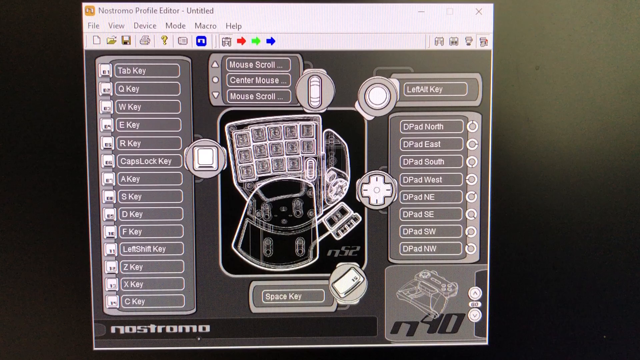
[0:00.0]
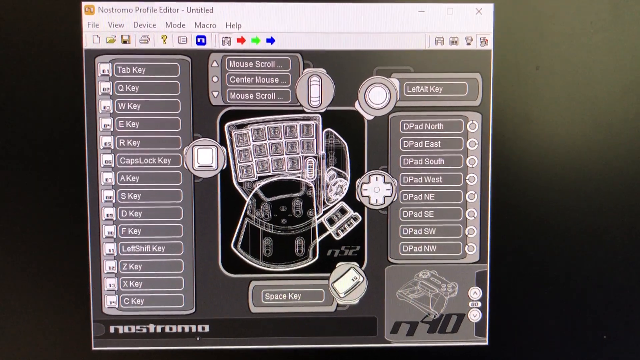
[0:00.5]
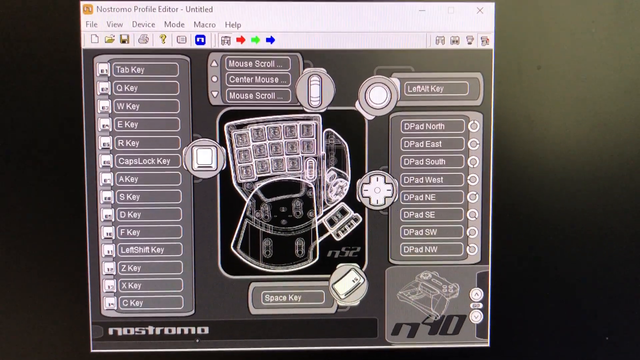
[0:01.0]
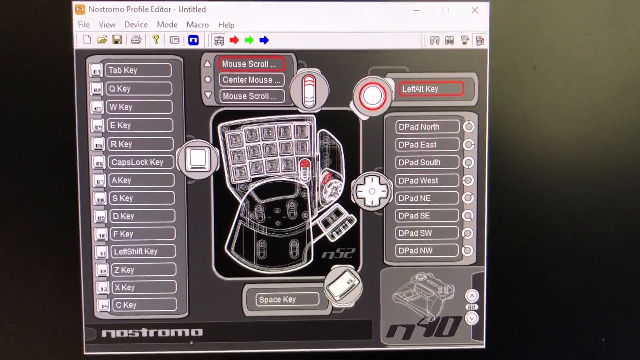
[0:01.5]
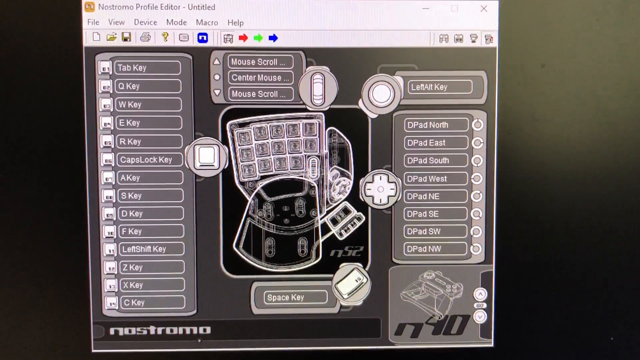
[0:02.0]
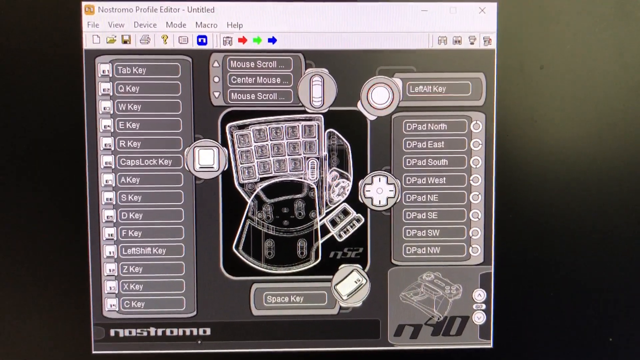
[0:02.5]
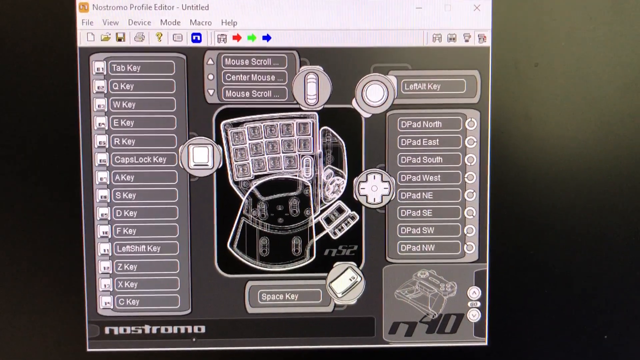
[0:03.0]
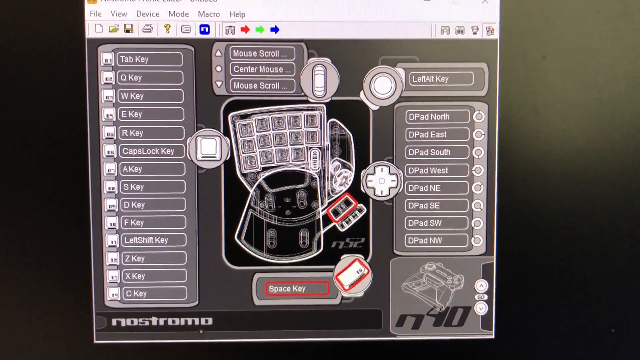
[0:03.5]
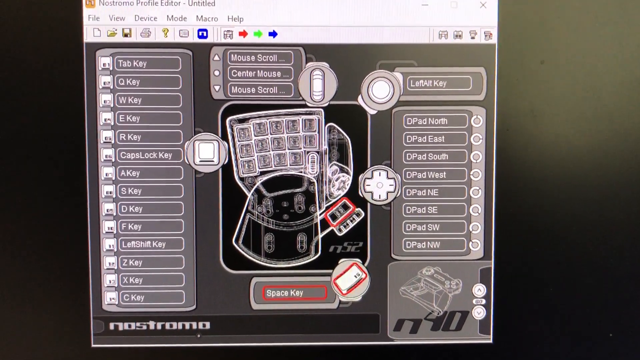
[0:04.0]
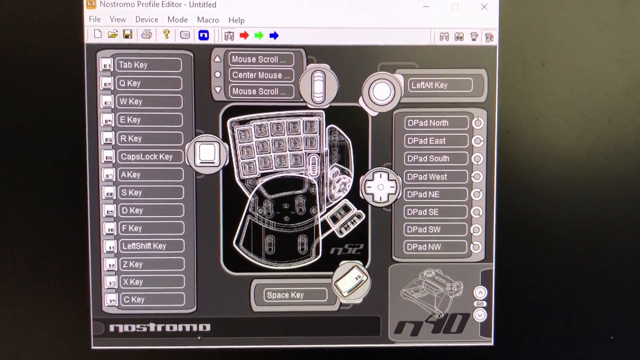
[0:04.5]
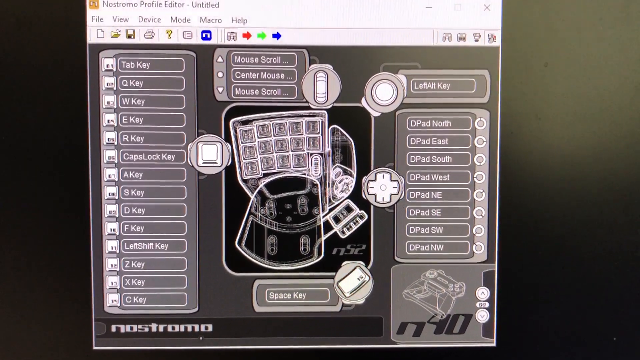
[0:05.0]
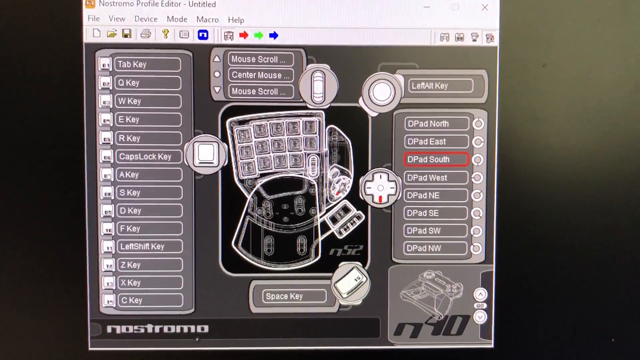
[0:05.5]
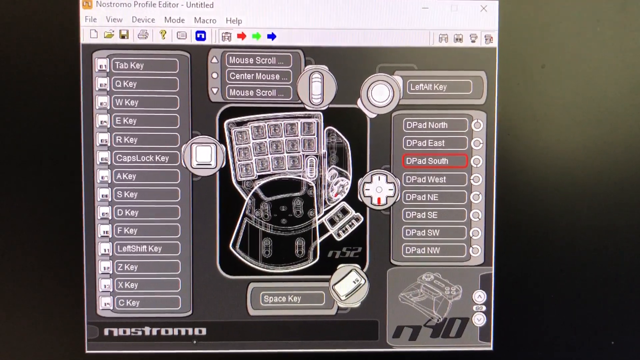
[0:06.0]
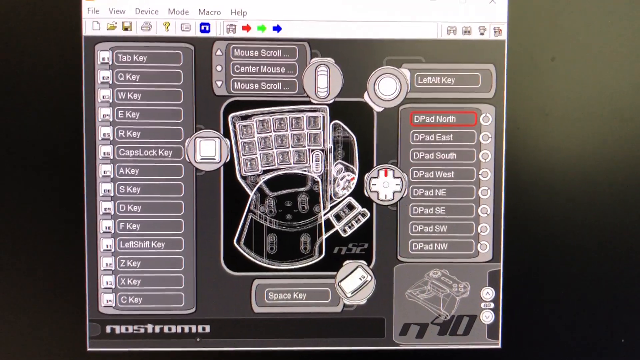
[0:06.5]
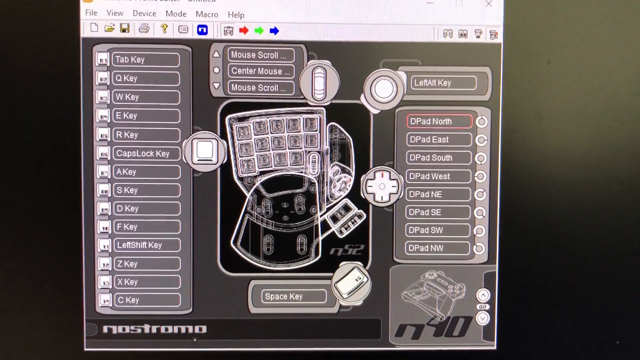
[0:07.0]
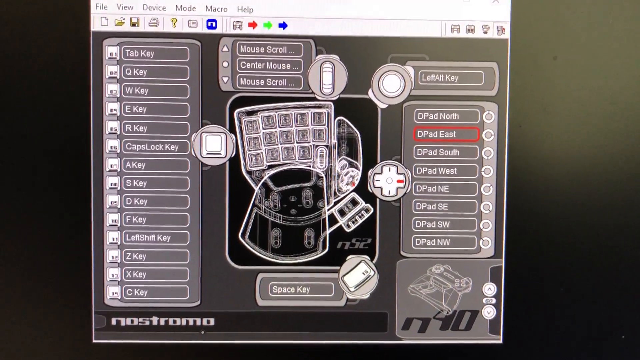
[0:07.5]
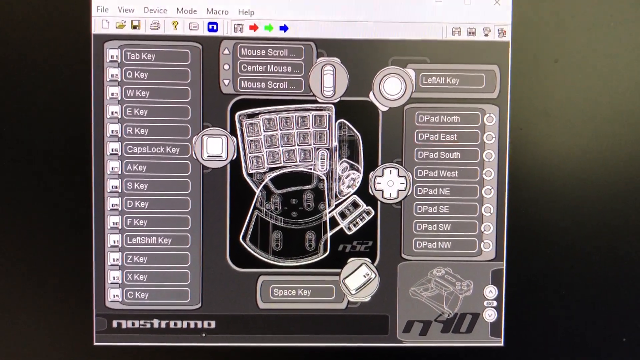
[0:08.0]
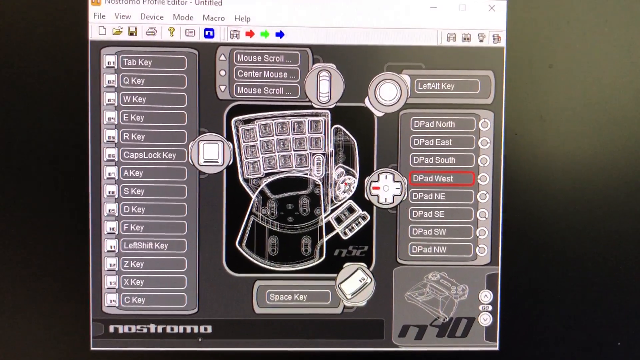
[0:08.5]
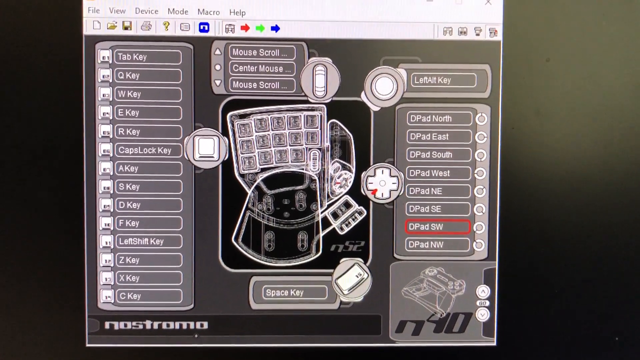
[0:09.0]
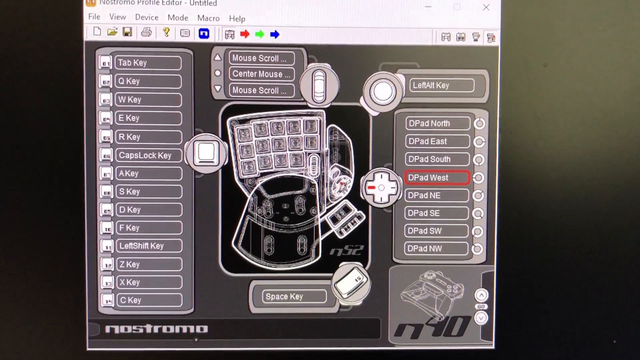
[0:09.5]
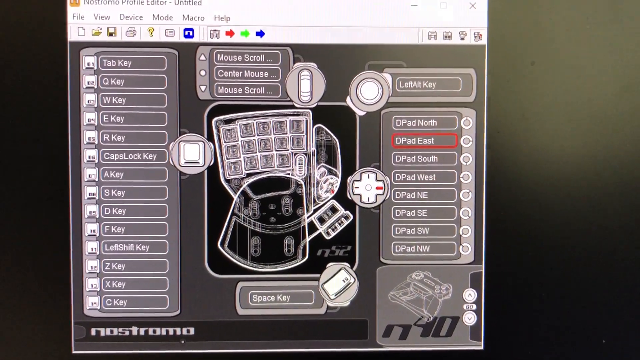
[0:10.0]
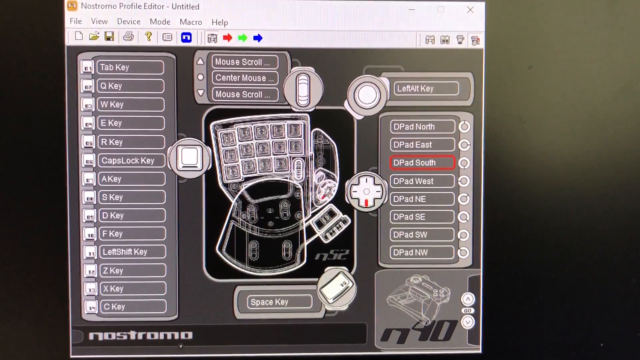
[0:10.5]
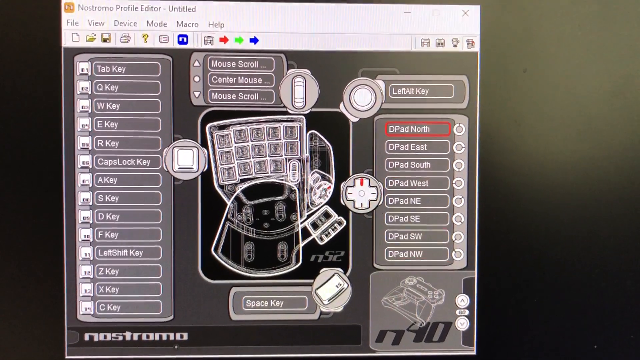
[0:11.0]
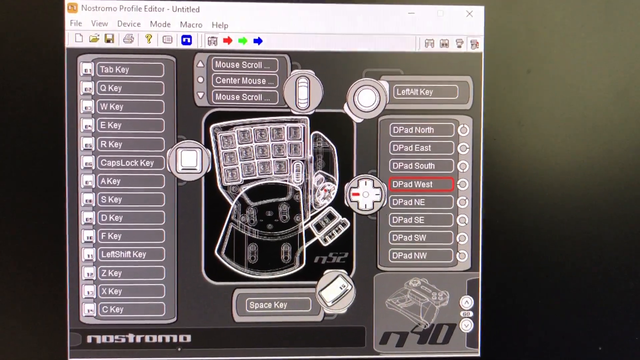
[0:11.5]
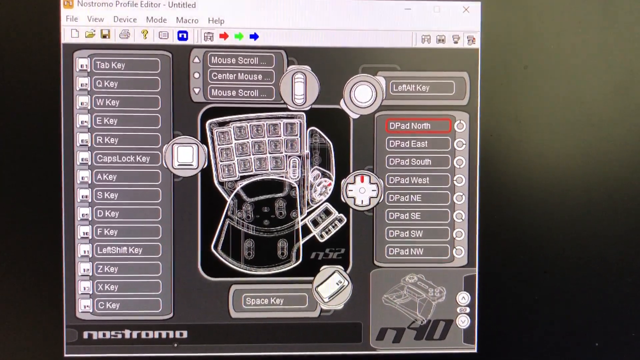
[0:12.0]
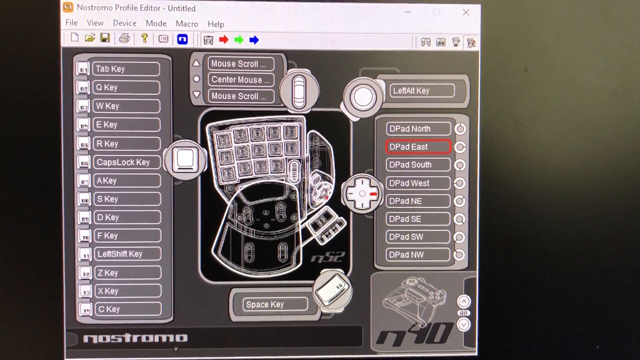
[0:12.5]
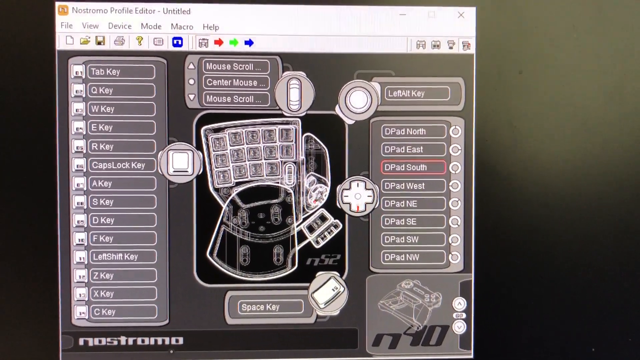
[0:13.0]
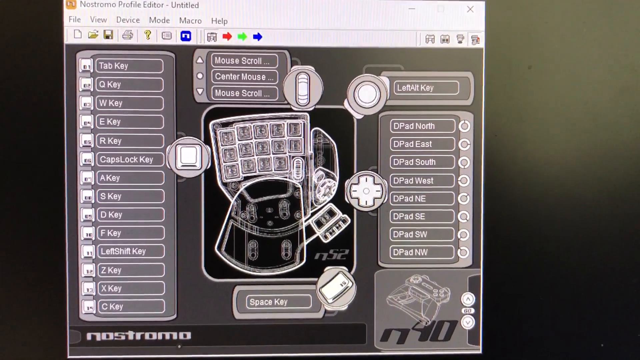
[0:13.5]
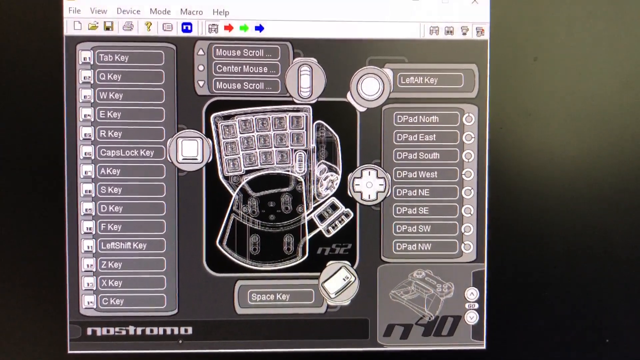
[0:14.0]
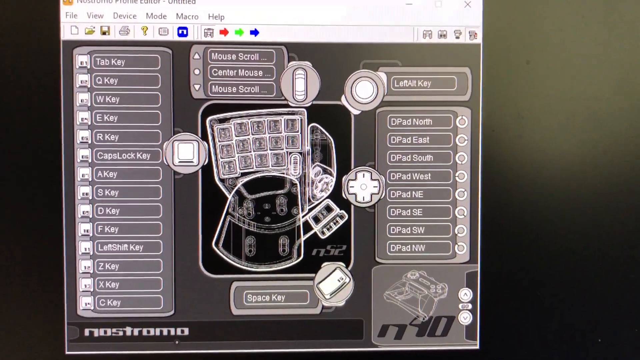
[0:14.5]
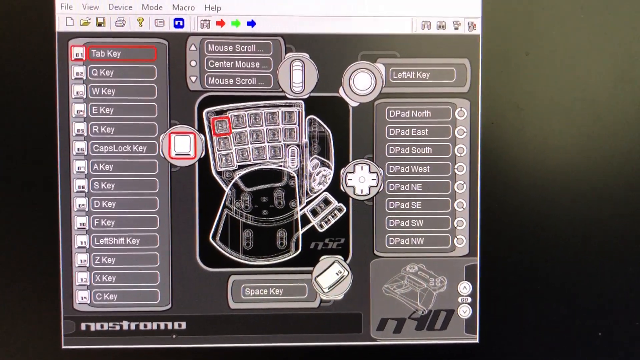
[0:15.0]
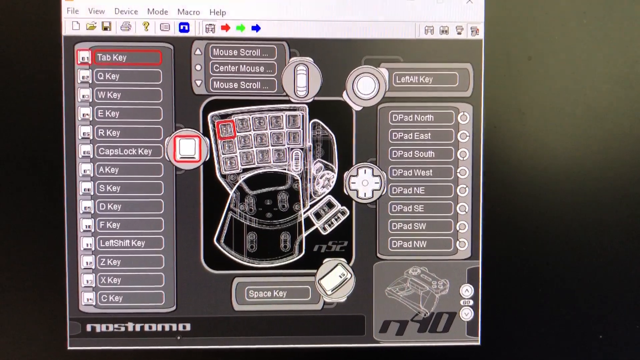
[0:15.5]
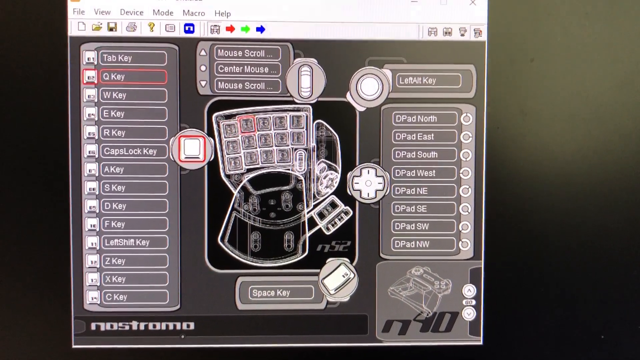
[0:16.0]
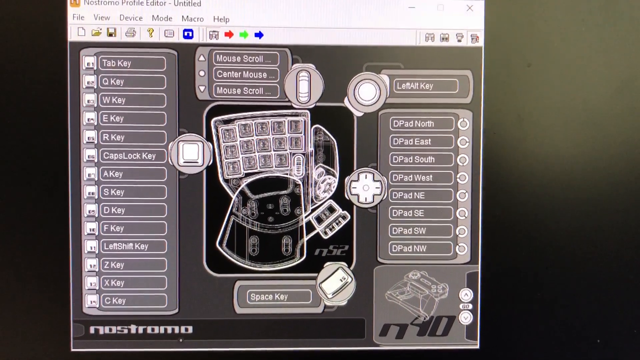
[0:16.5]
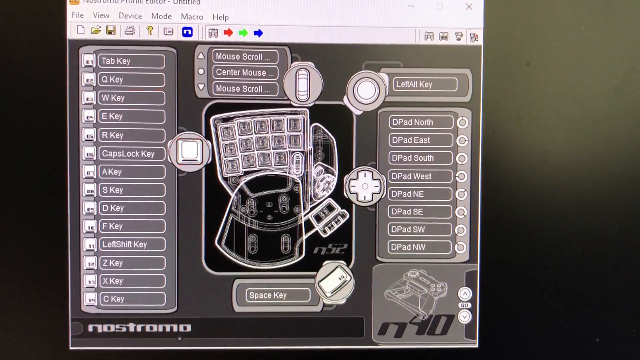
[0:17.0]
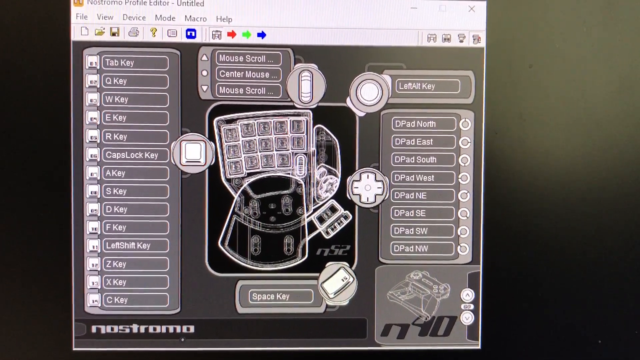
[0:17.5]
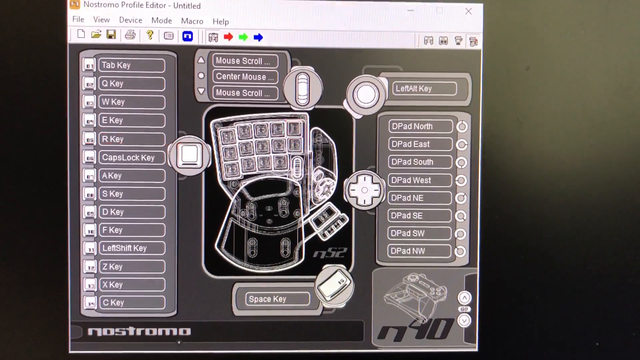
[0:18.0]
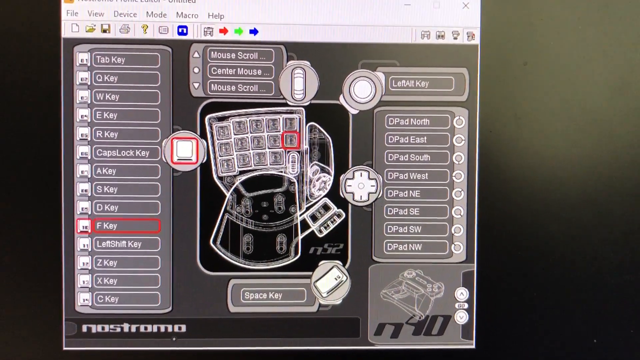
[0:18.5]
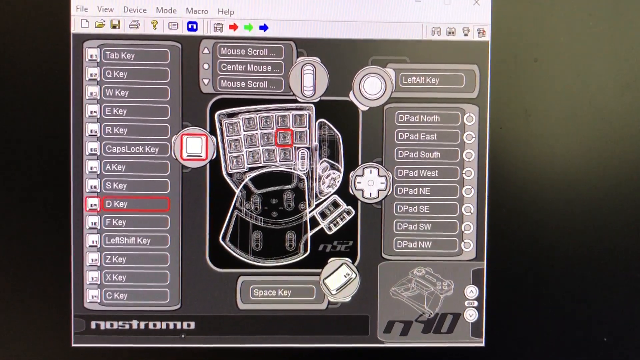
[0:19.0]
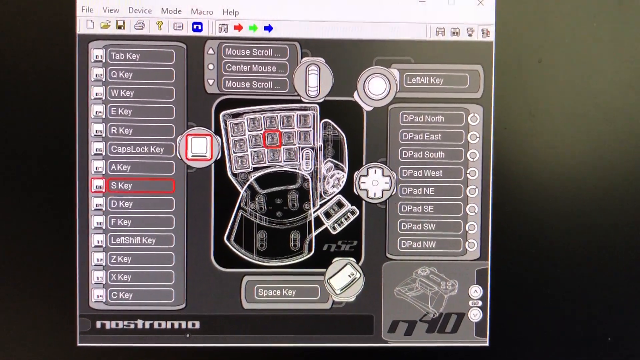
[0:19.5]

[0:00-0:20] A computer screen shows what looks like some sort of diagram. The background is black, with gray tables of white text and some white rectangles that look somewhat like links on a web page. In the middle is what seems to be a strange-looking schematic for a keyboard, showing keys such as tab, Q, W, E, R, caps lock, A, S, D and F. It is potentially the programming of a two-sided keyboard. Some red highlights appear, apparently as a key function is being programmed to the actual key. The upper taskbar of the program being used is visible. In the lower left-hand corner is the word "Nostromo", and in the lower right is what seems to read "N40", partly hard to see because something is covering it.